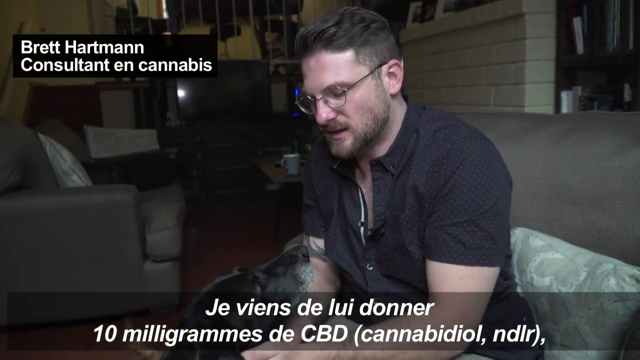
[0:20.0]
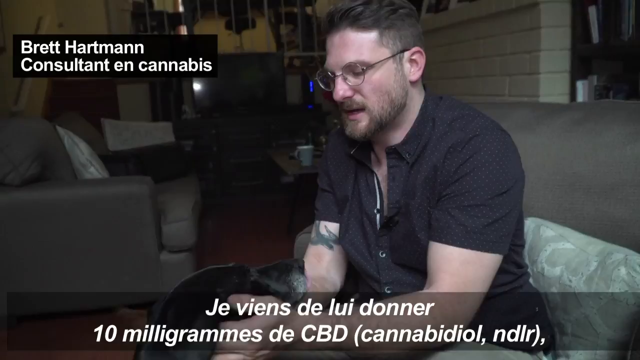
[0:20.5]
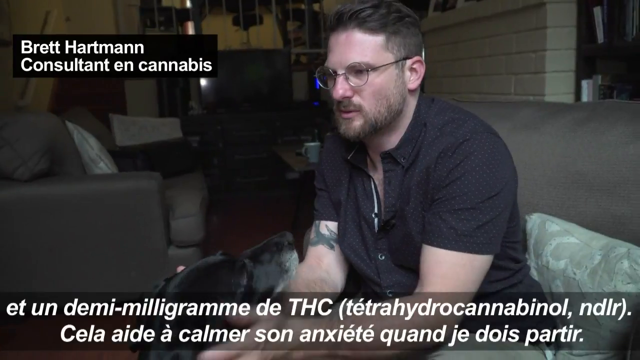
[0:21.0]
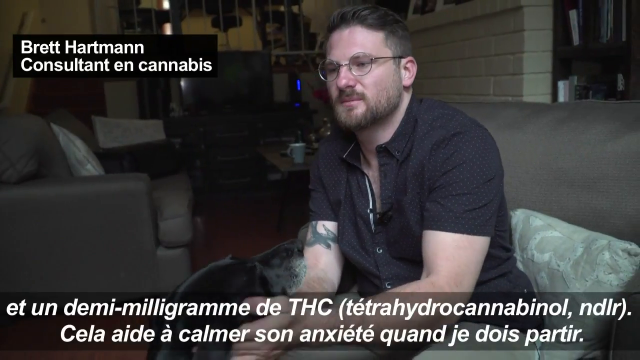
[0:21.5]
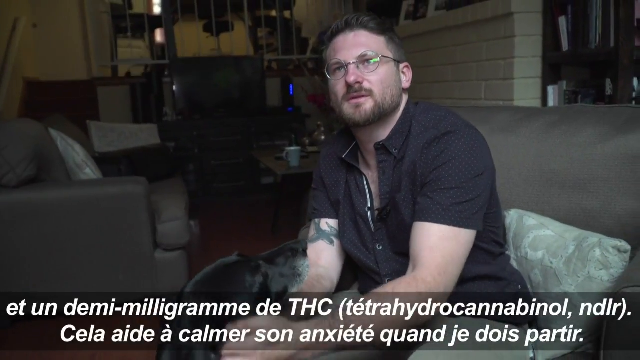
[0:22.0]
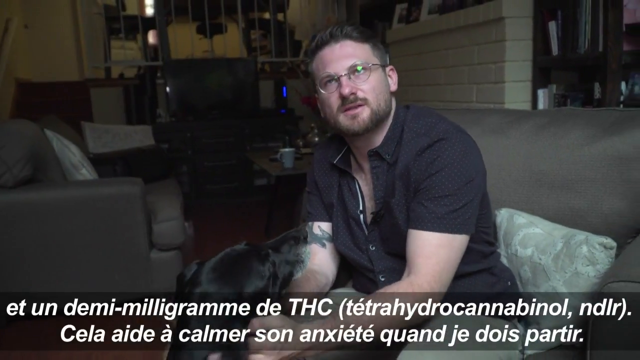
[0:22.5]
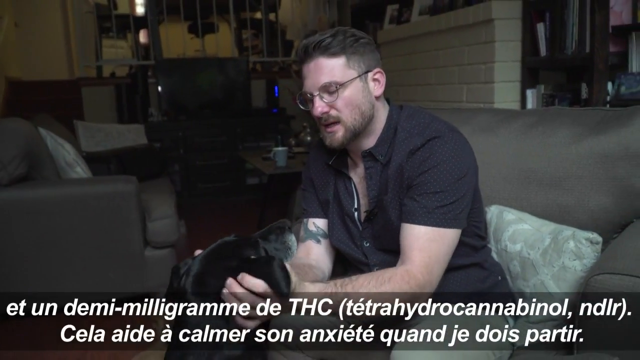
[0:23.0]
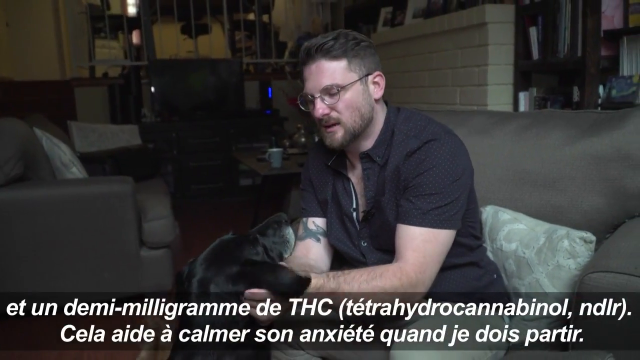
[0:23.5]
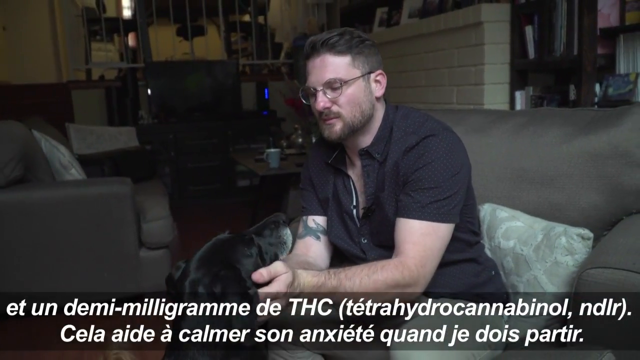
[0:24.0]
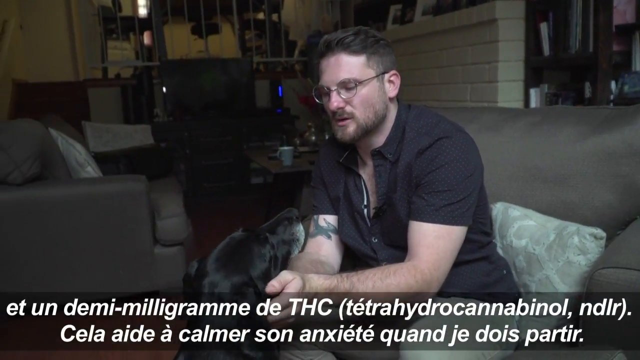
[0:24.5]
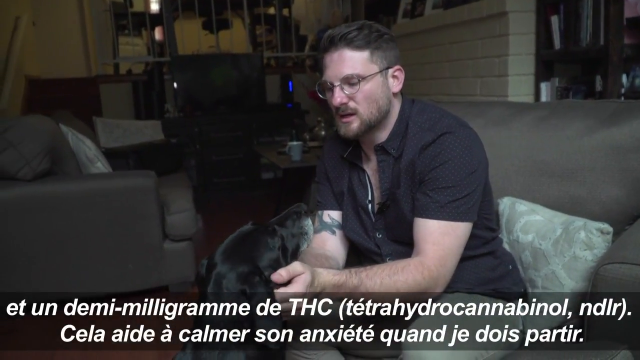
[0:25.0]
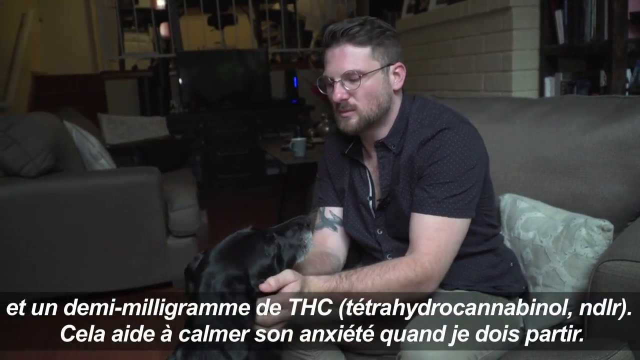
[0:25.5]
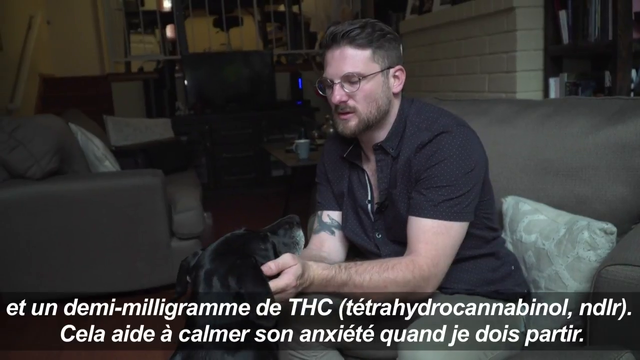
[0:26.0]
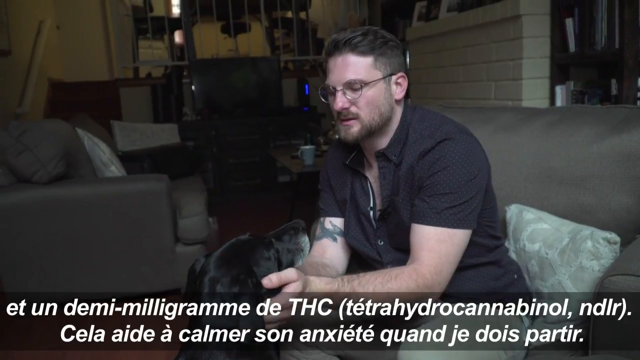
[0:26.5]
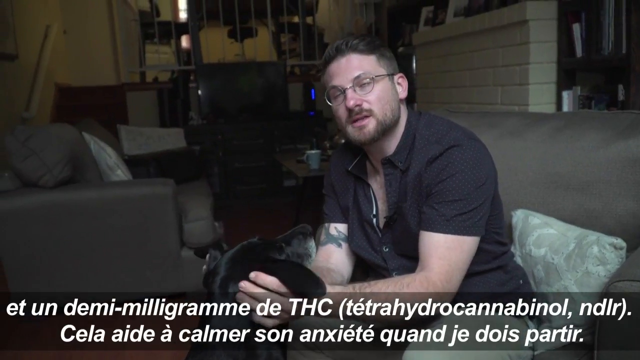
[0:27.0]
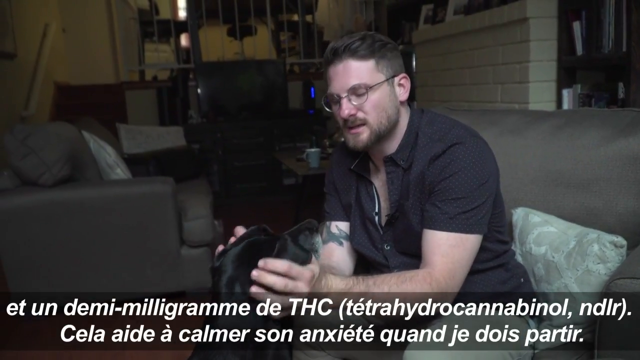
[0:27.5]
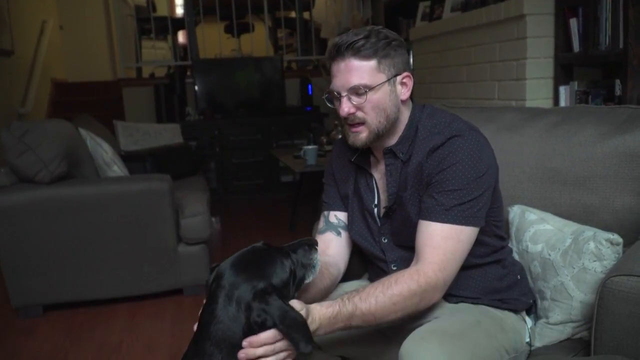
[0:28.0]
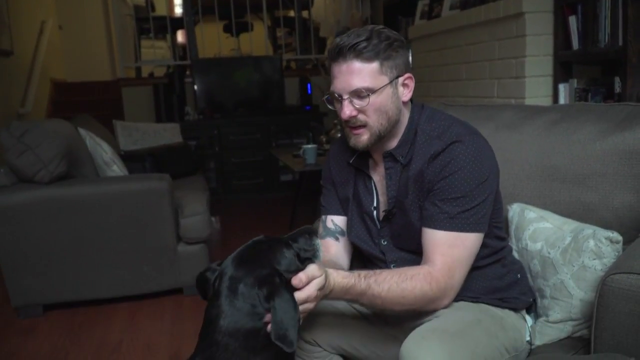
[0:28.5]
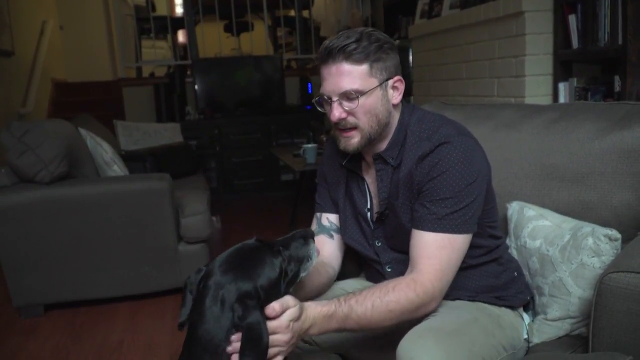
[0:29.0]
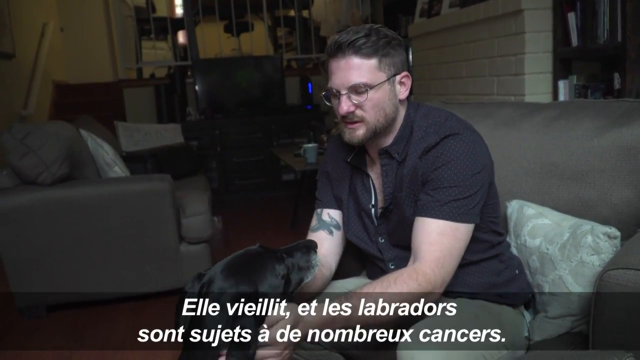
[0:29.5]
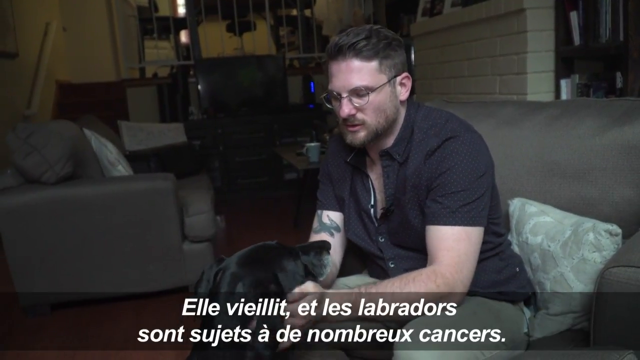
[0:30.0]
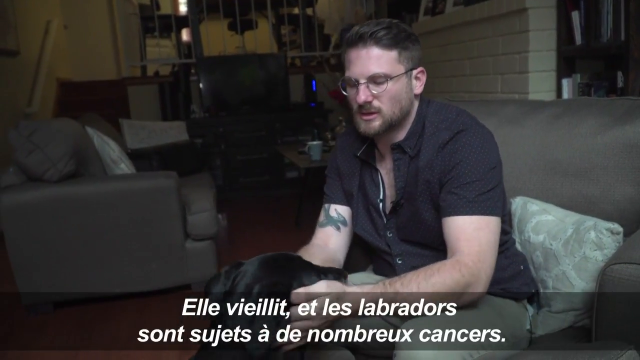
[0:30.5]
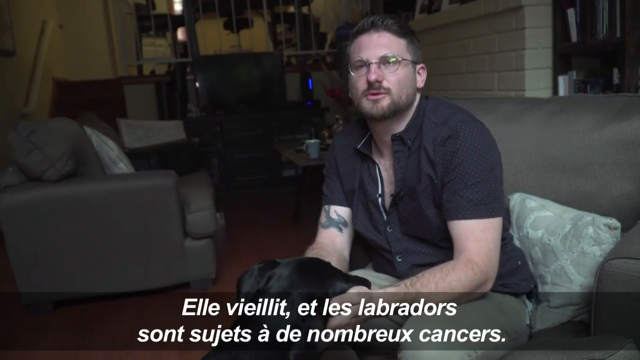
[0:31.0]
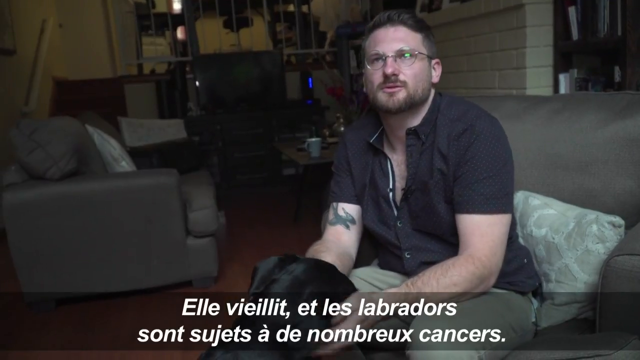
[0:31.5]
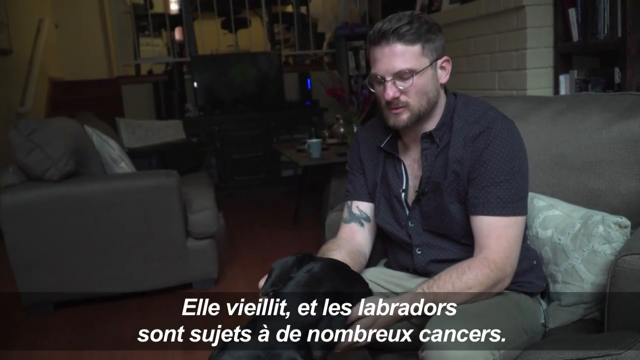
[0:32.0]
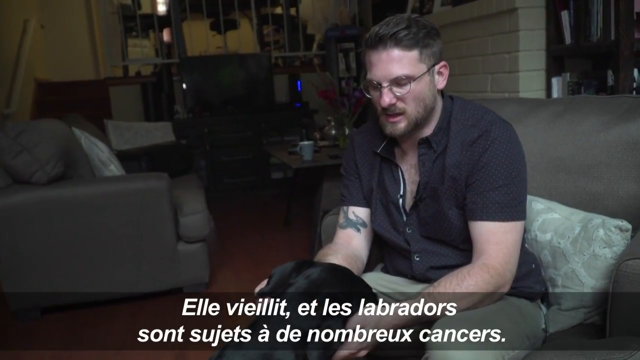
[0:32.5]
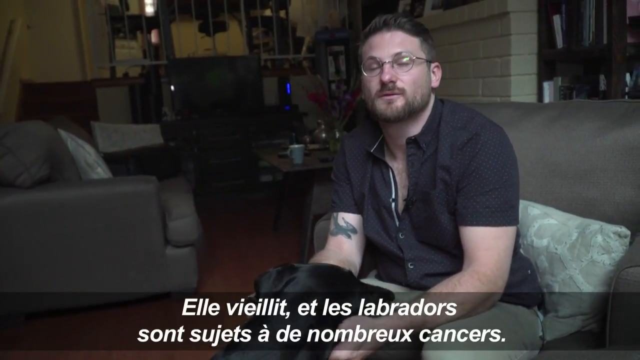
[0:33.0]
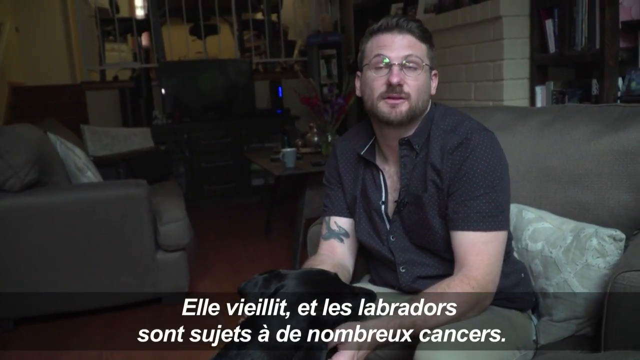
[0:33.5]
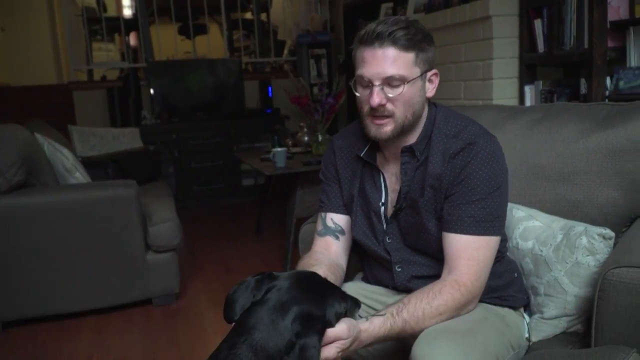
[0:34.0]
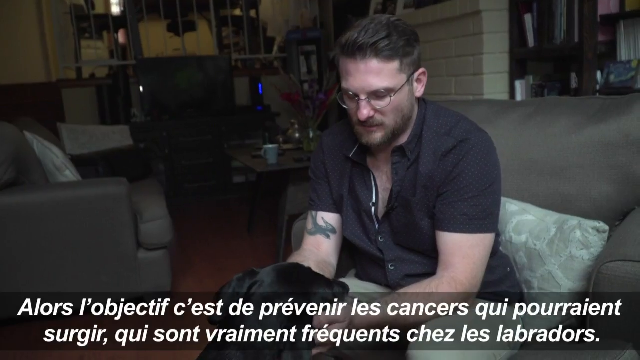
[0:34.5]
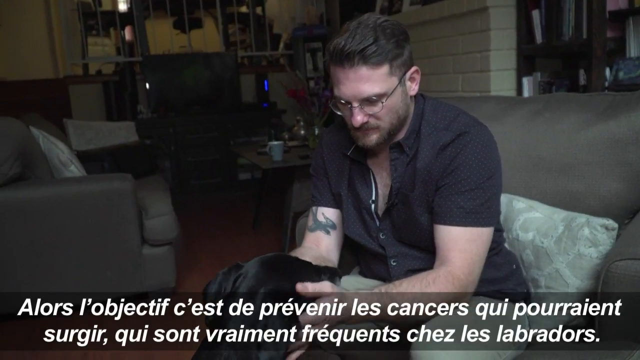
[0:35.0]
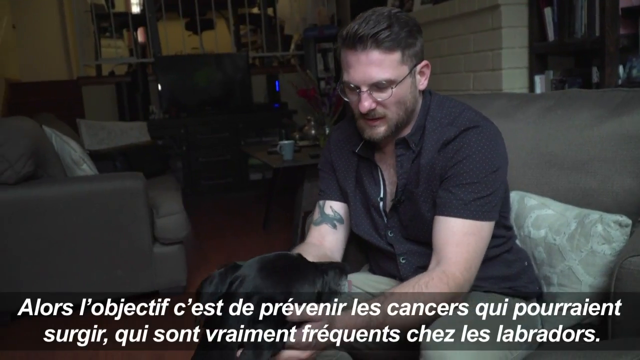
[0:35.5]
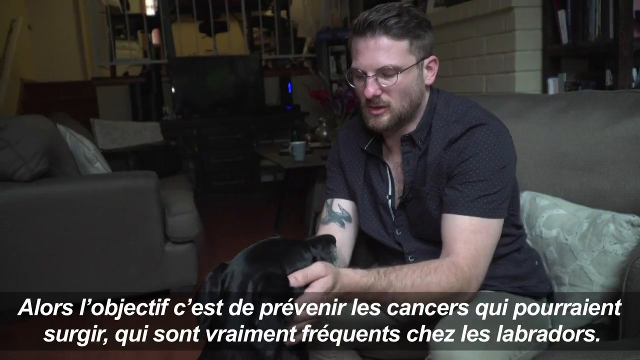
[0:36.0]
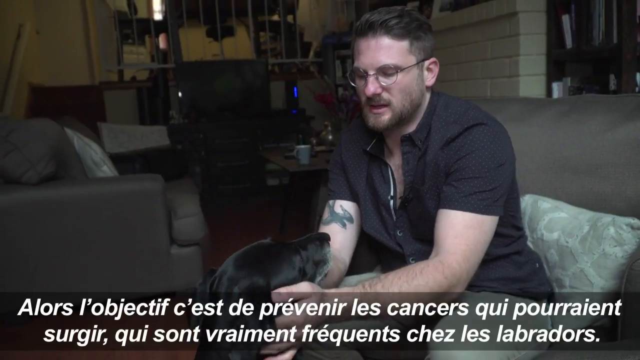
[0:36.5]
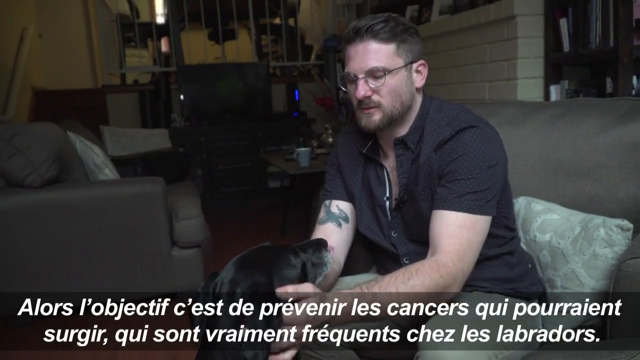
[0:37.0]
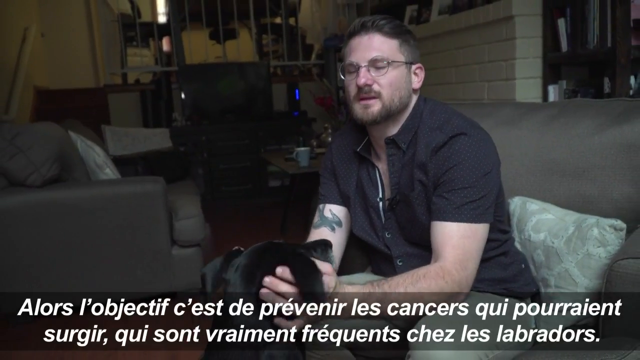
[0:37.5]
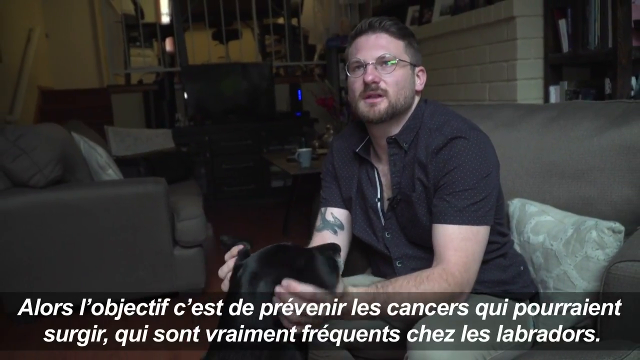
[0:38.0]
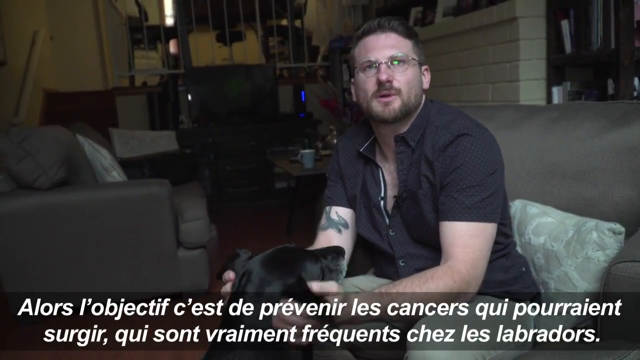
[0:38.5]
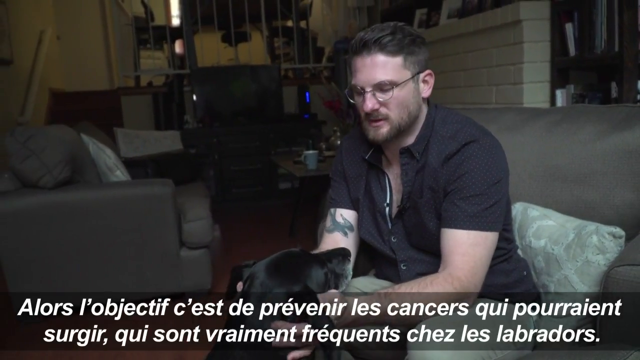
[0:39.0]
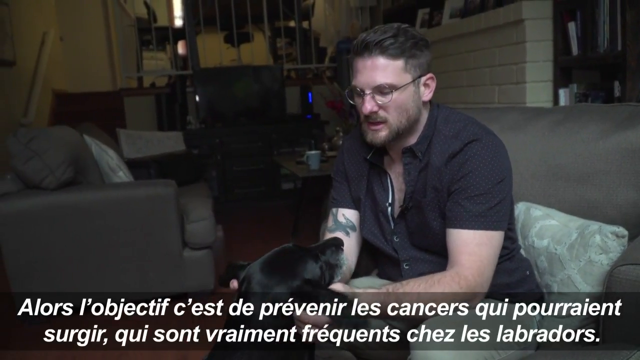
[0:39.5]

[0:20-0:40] The man, in his mid-40s with dark hair and dark eyes, glasses, a mustache and a beard, wears a short-sleeved black collared shirt. Directly in front of him is a black dog with gray on its muzzle, apparently an older dog, looking up at him. At the top of the screen, in French, his name reads "Brett Hartman" with "consultant in cannabis" underneath. The French closed captions at the bottom read "je viens de lui donner" and, below that, "10 milligrams de CBD (cannaboid)".